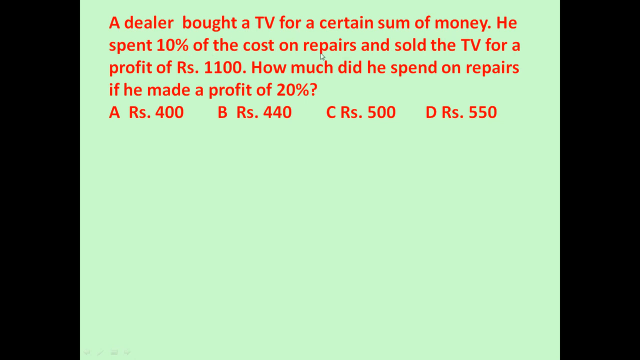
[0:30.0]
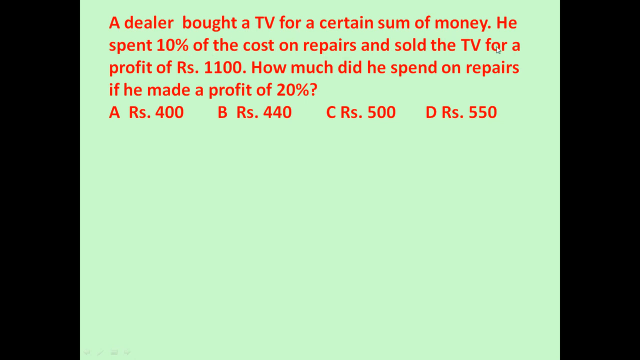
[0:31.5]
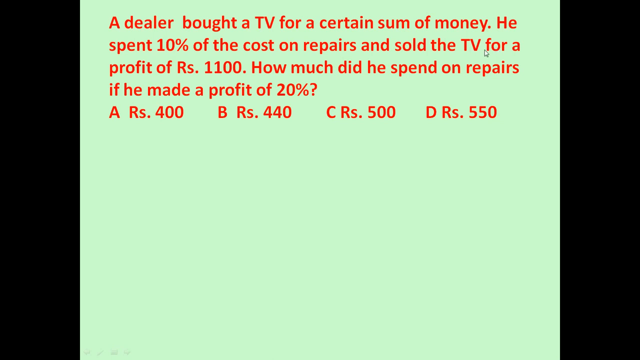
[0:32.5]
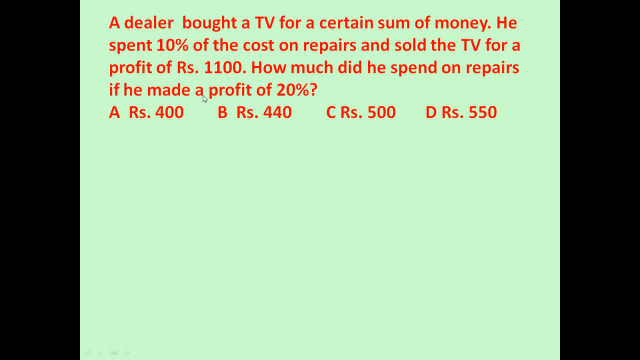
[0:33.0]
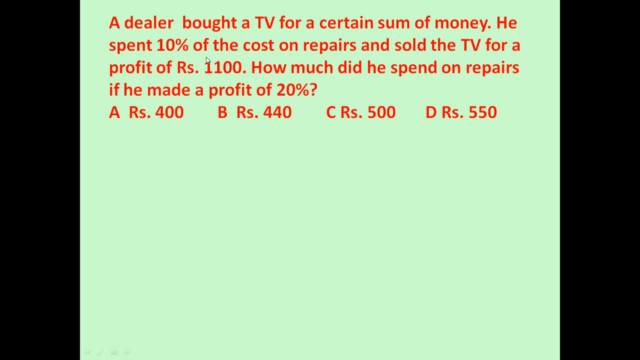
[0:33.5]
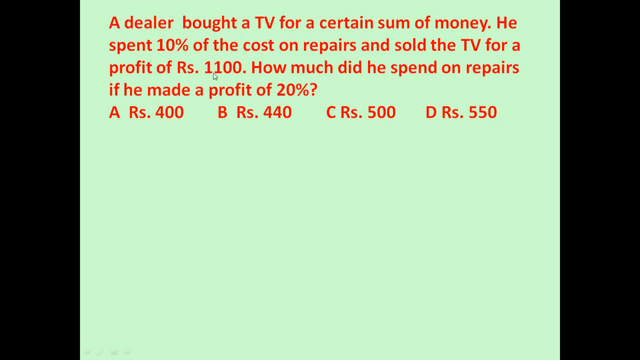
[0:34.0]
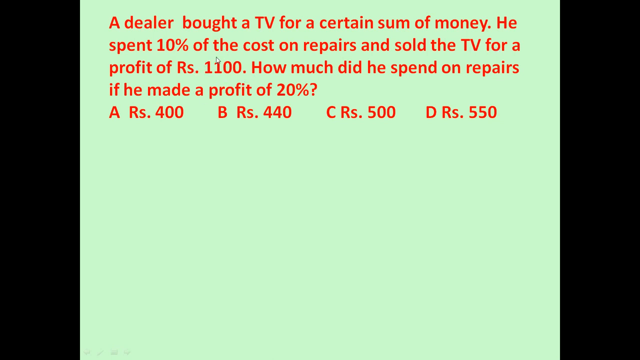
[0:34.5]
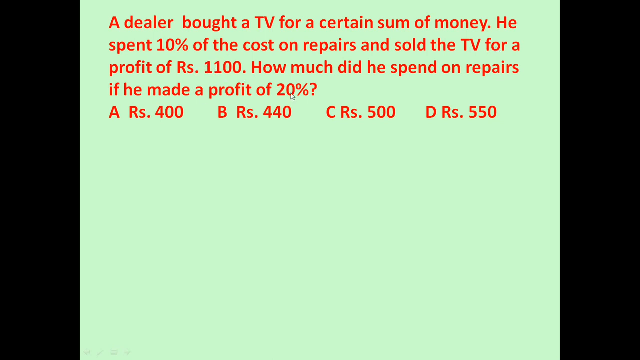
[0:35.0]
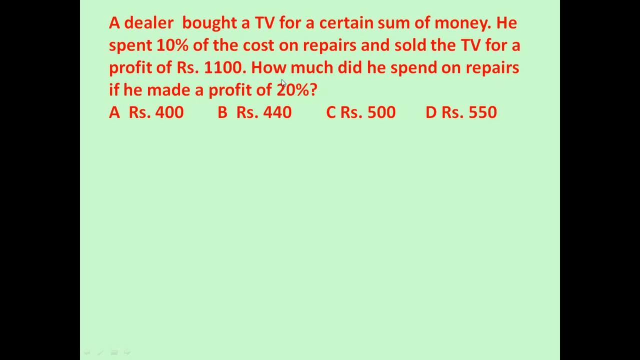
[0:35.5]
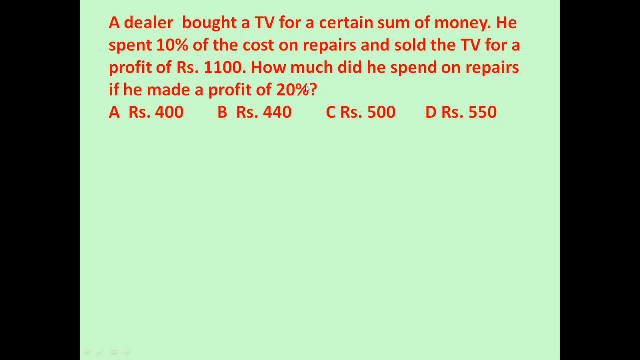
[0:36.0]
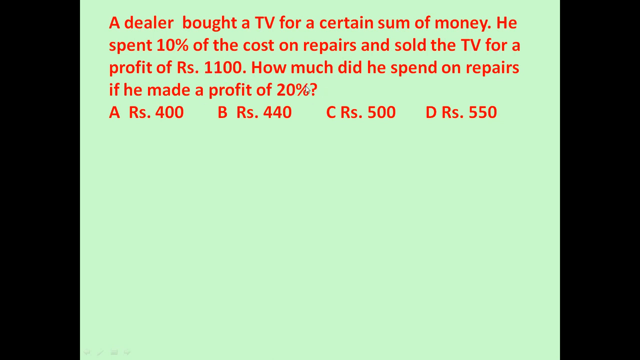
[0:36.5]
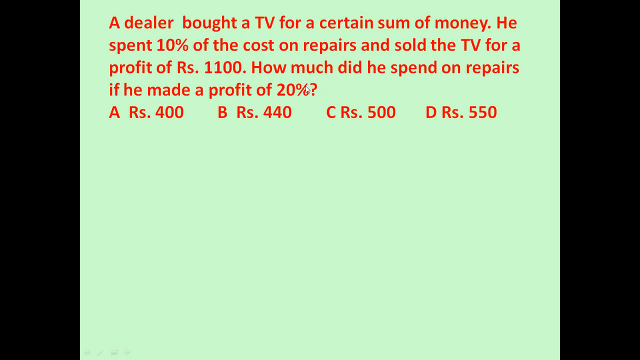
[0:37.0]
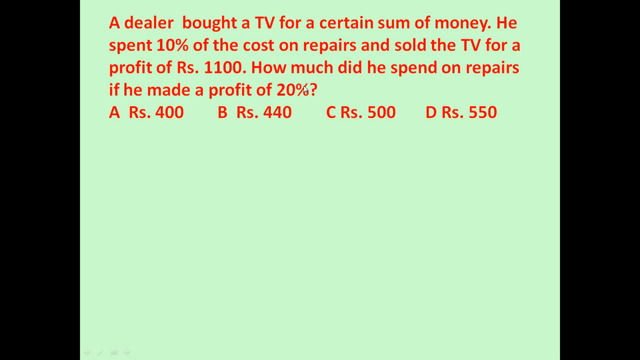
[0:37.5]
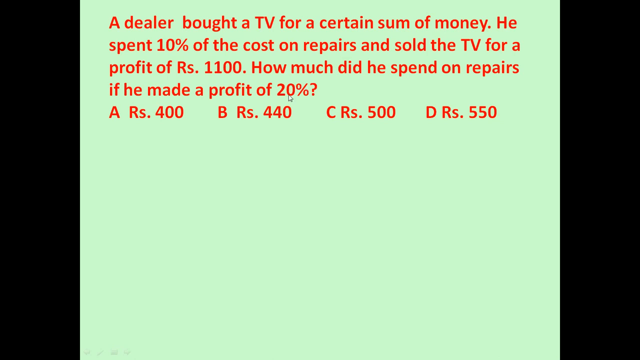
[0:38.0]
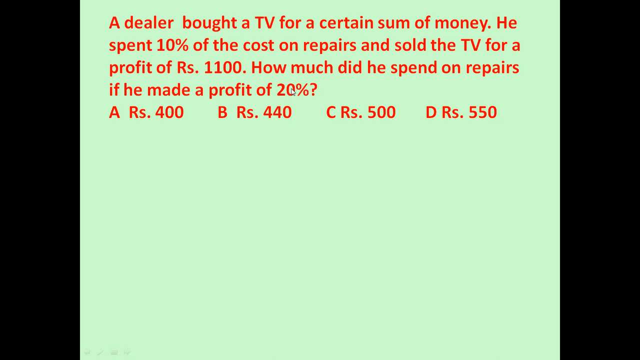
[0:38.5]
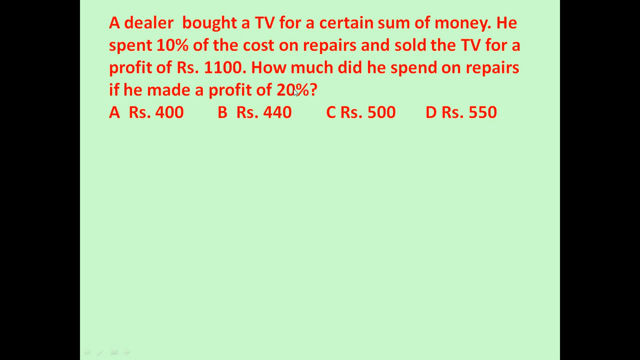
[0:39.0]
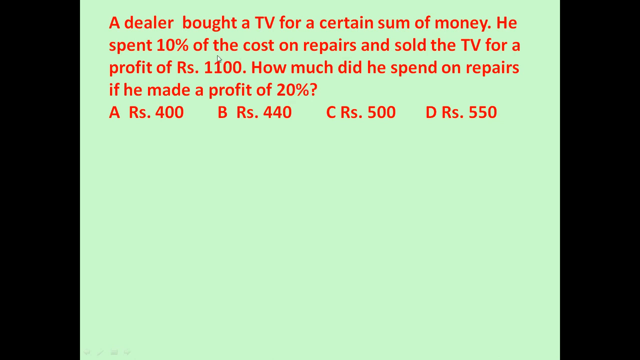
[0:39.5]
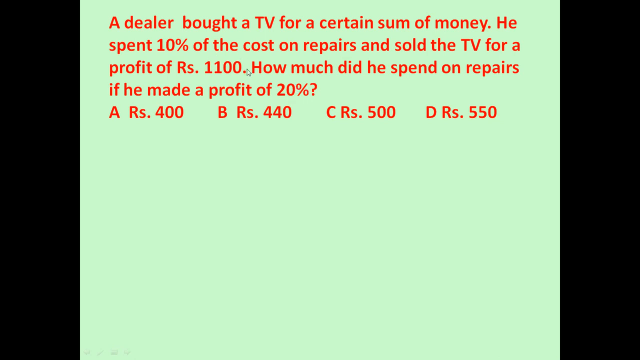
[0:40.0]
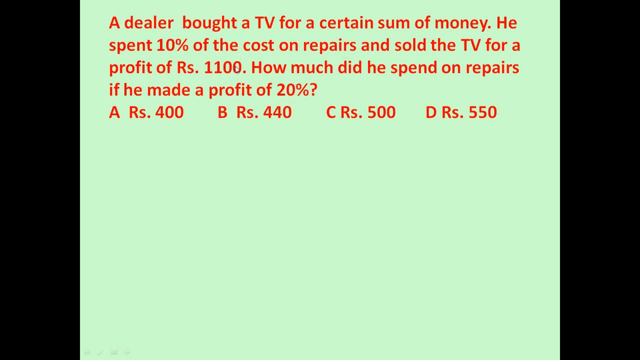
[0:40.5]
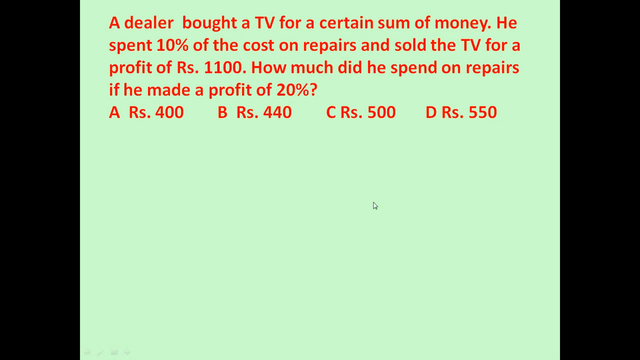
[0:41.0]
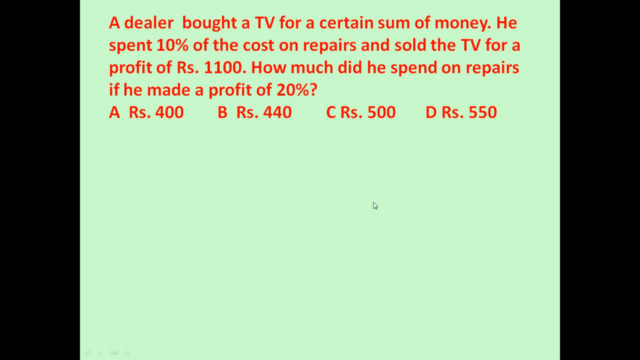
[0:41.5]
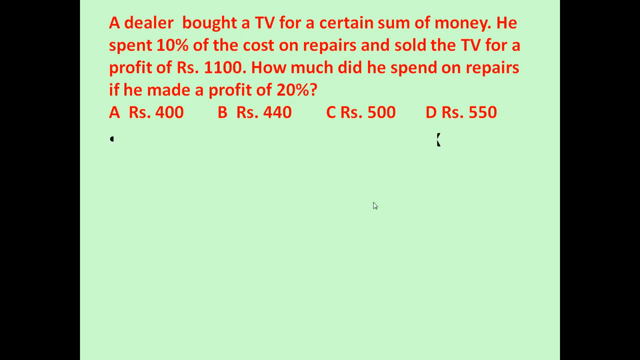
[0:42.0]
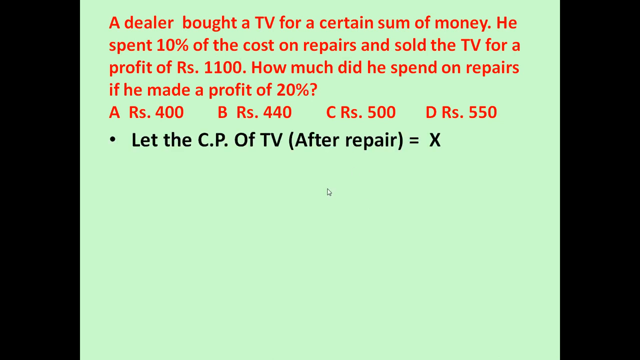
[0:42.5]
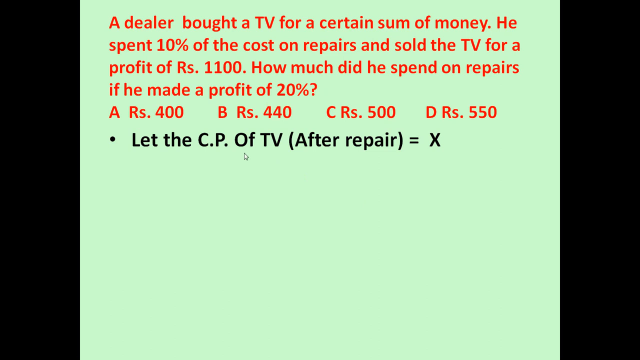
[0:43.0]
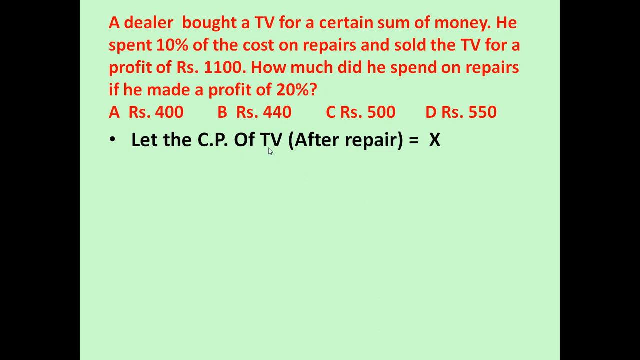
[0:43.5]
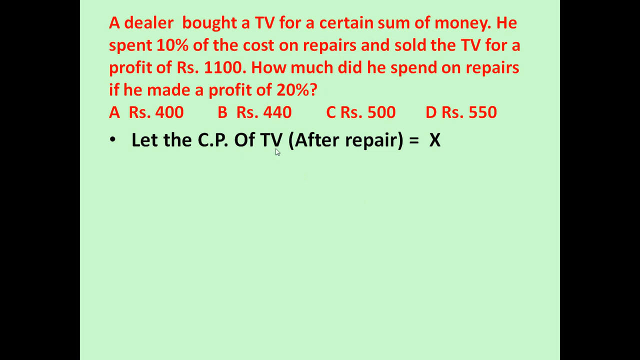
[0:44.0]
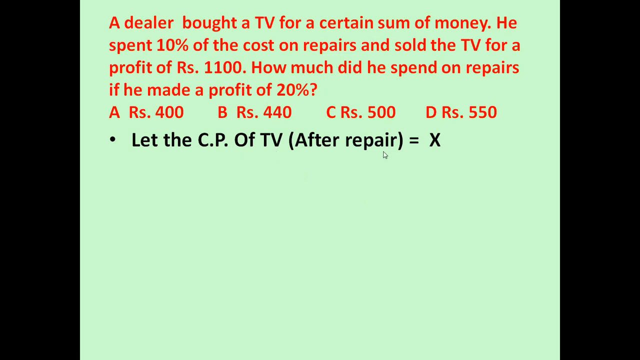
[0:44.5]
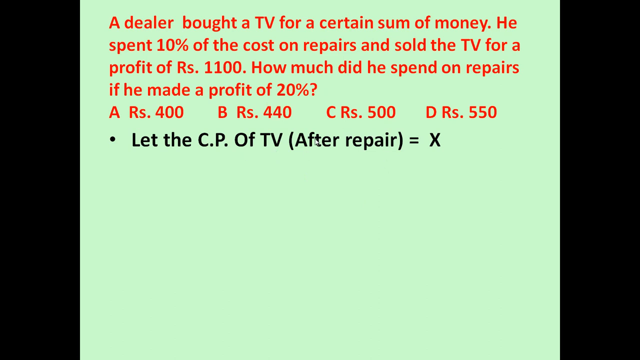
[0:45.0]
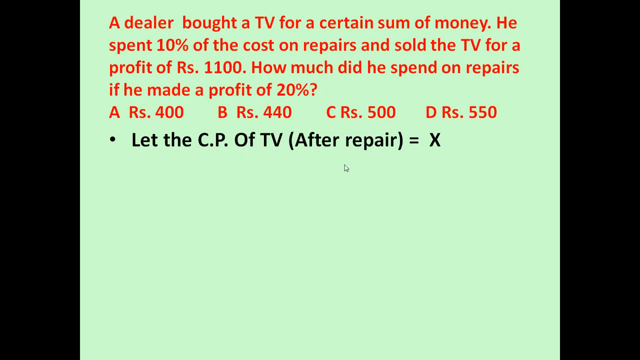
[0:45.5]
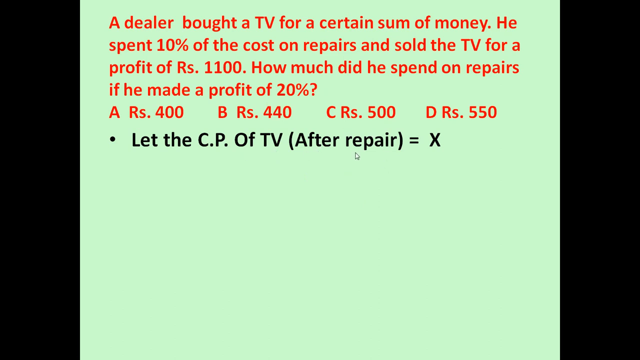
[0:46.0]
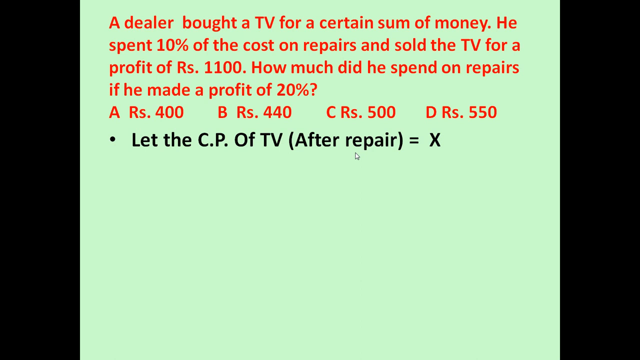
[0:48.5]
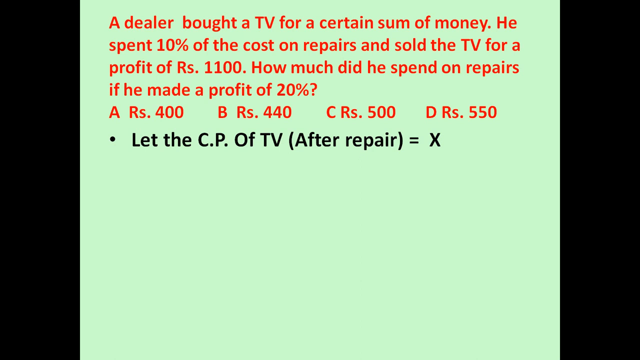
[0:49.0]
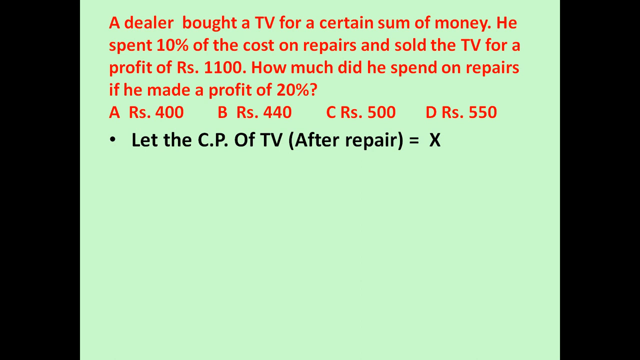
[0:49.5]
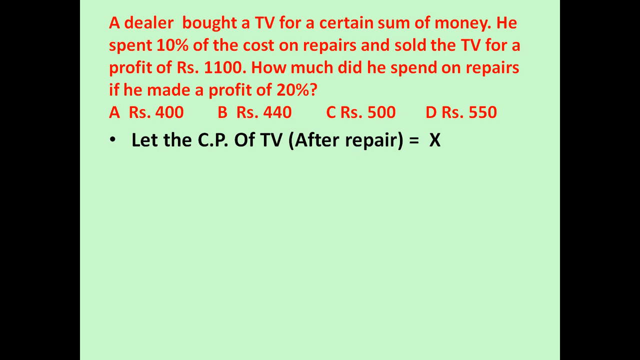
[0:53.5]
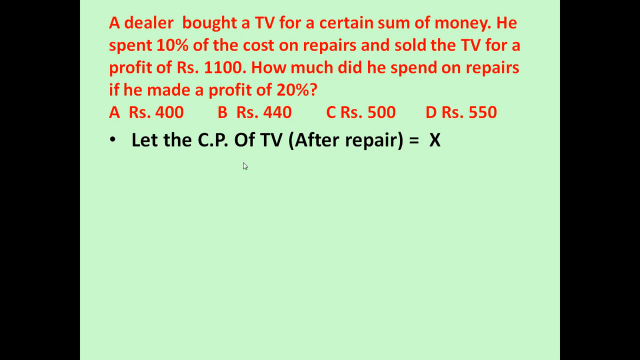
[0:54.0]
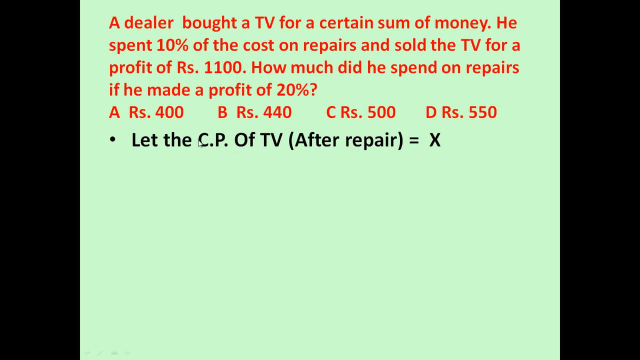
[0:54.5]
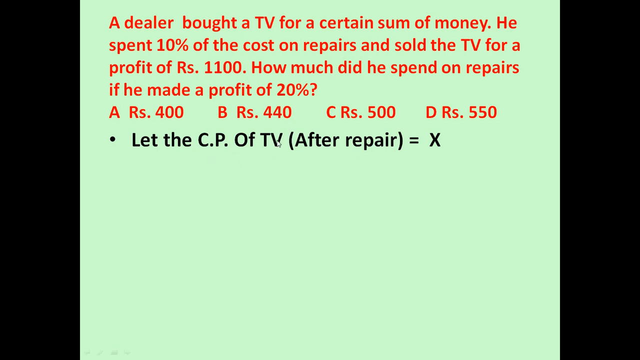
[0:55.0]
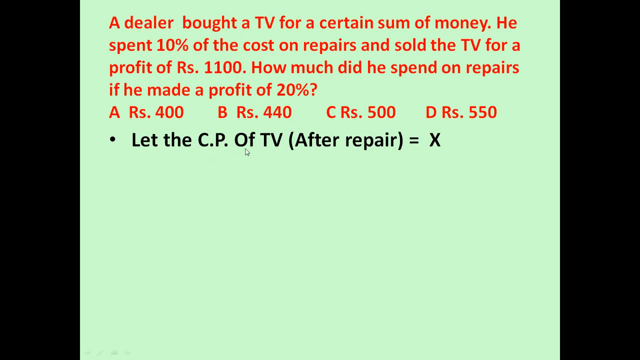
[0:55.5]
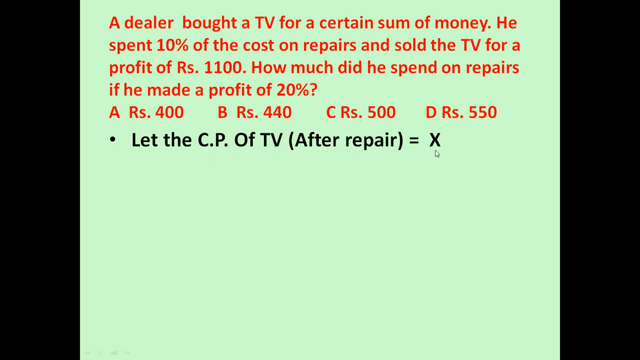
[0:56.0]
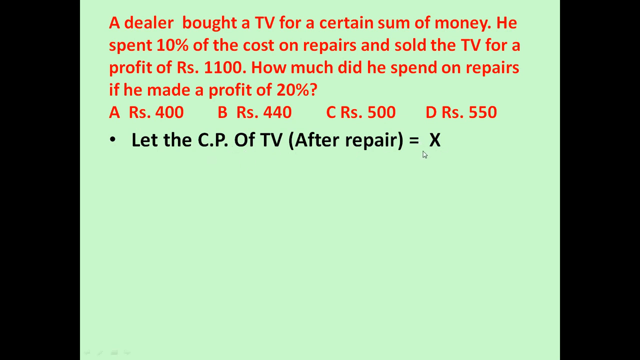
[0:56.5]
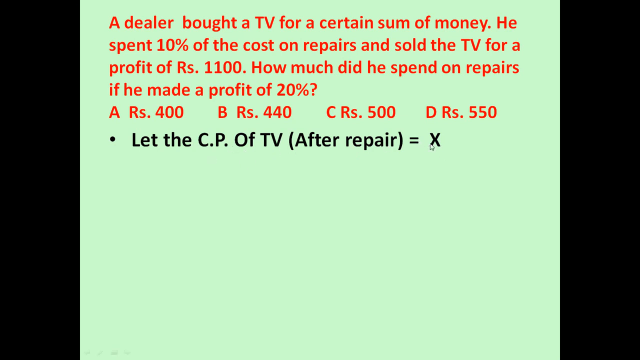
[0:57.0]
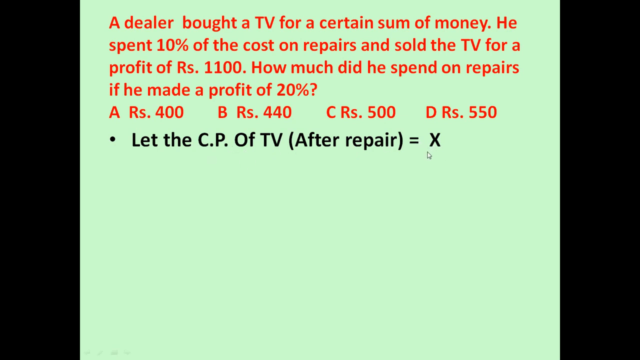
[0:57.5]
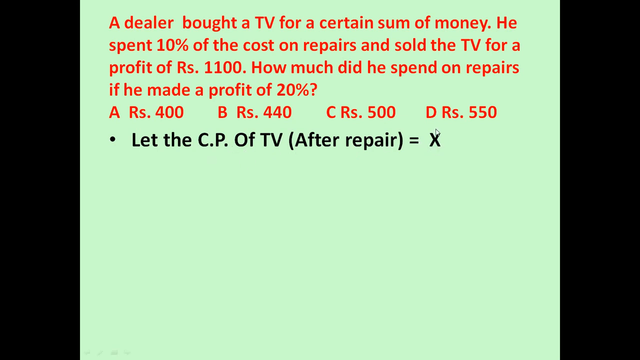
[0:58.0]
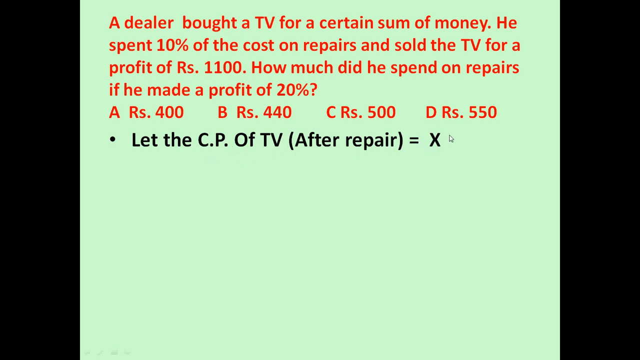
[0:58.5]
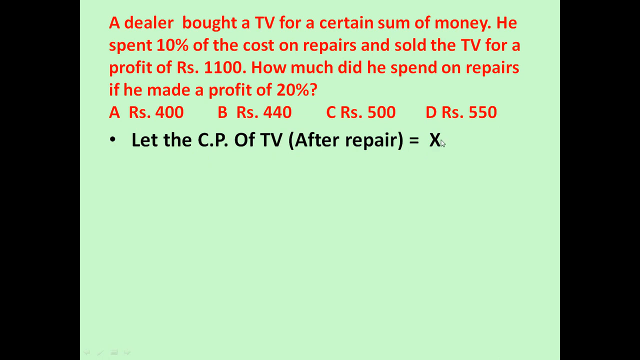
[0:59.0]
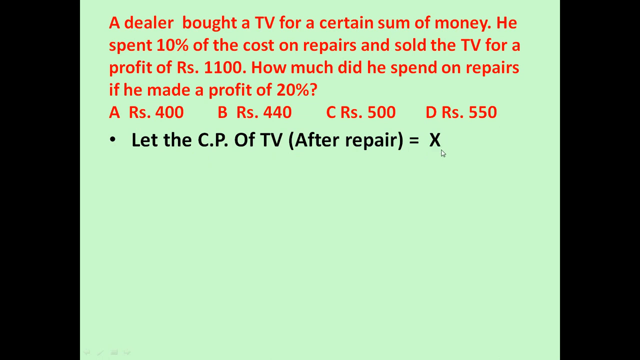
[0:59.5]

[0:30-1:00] A picture of an Indian man with short hair and a blue shirt appears; he is smiling with his left hand on his chin. His name is A.K. Agarwal, and this is the A.K. Agarwal Aptitude Series about Profit and Loss number 4. Next comes a question with four possible answers, in red letters on a lime green background. The question reads: "A dealer bought a TV for a certain amount of money. He spent 10% of the cost on repairs and sold the TV for a profit of Rs. 1100. How much did he spend on repairs if he made a profit of 20%?" The options are: A, Rs. 400; B, Rs. 440; C, Rs. 500; D, Rs. 550. The cursor moves around, apparently to emphasise the important parts of the question.